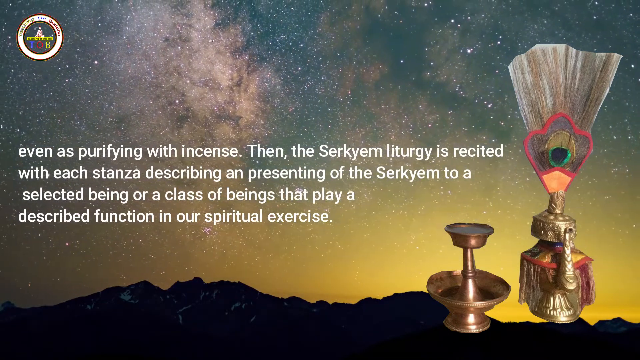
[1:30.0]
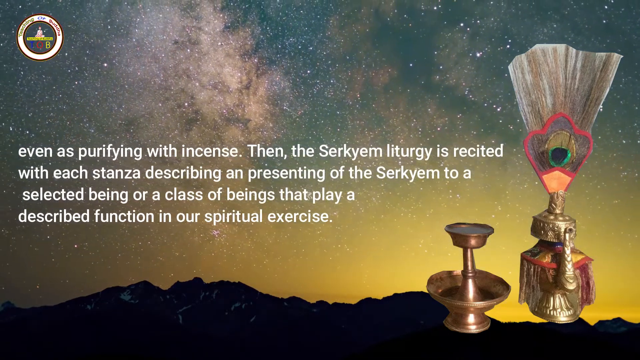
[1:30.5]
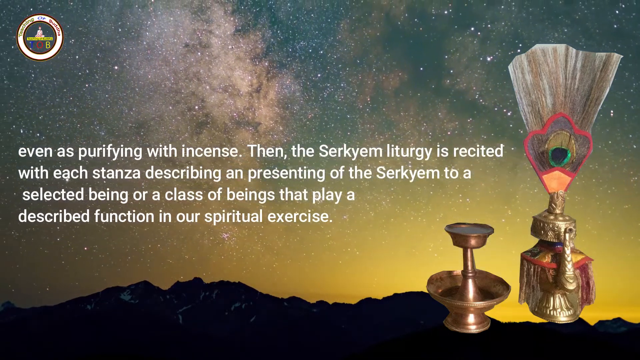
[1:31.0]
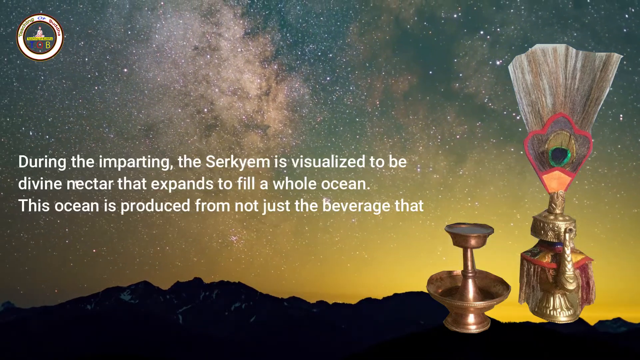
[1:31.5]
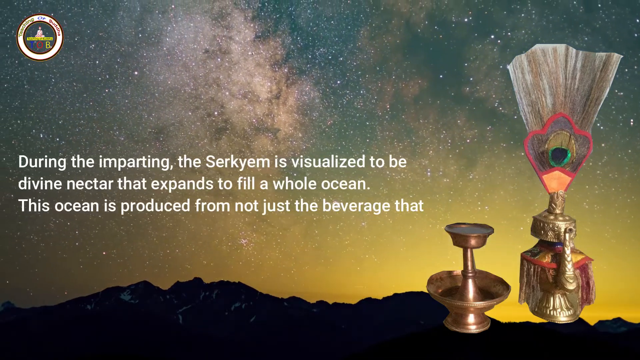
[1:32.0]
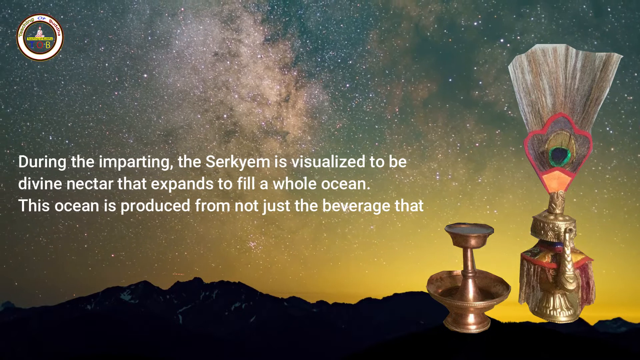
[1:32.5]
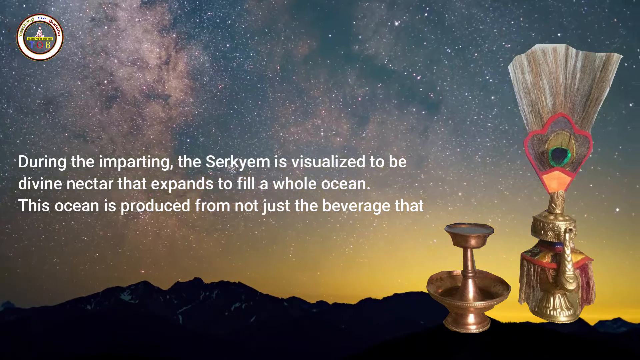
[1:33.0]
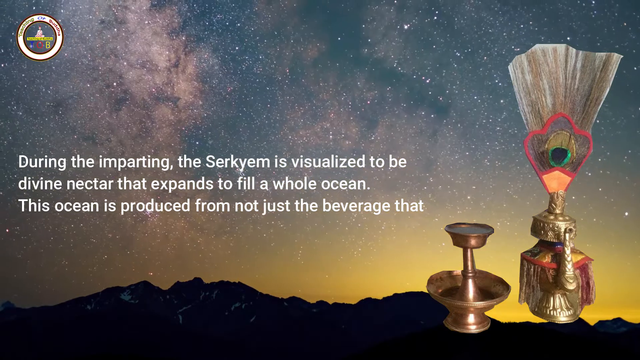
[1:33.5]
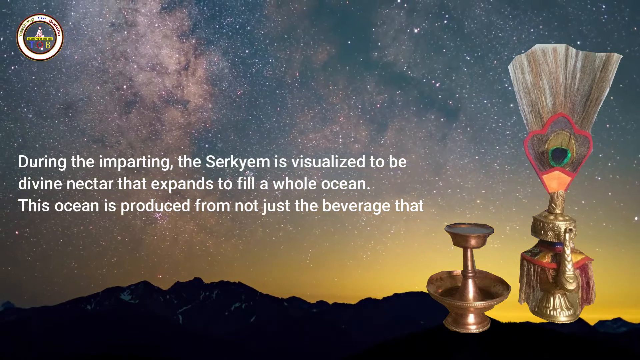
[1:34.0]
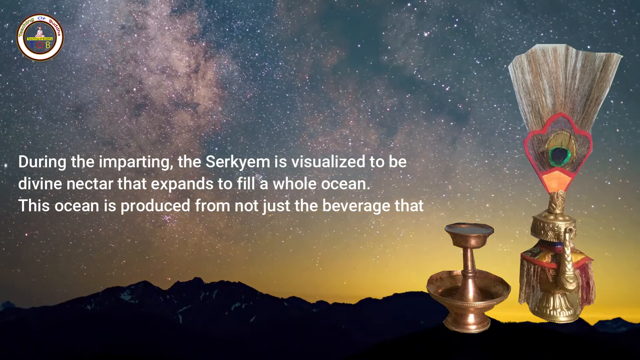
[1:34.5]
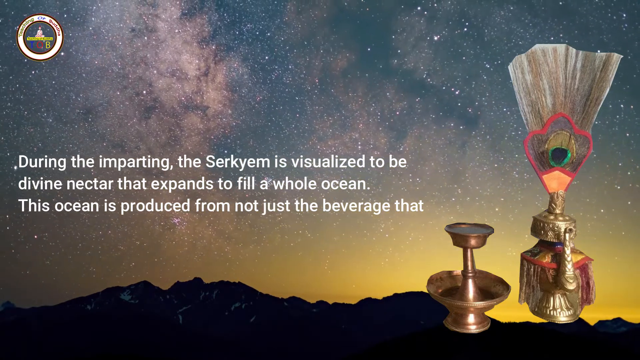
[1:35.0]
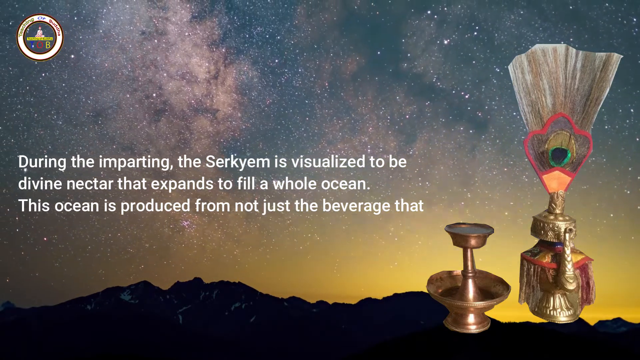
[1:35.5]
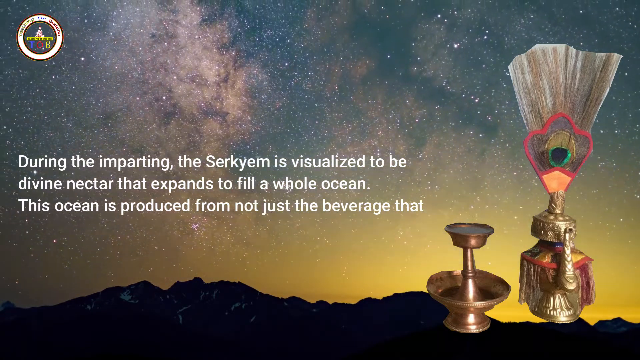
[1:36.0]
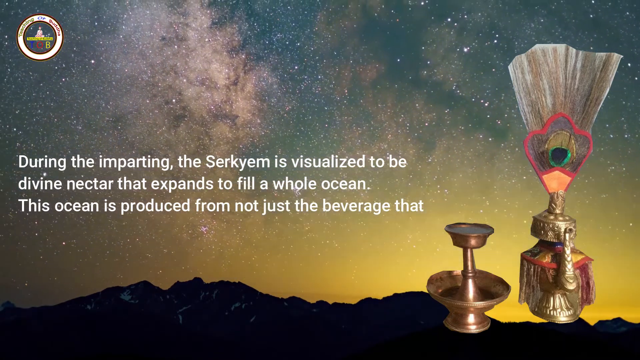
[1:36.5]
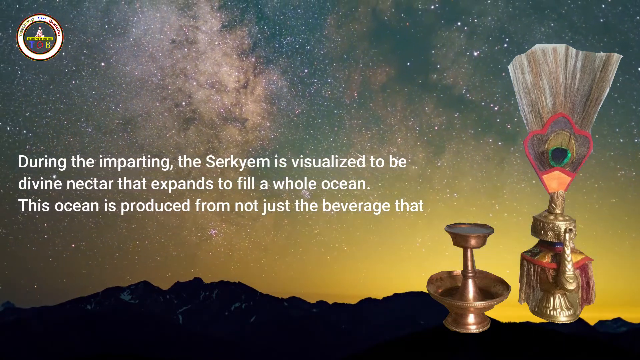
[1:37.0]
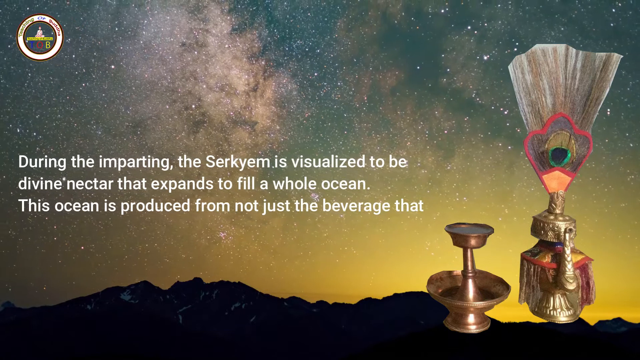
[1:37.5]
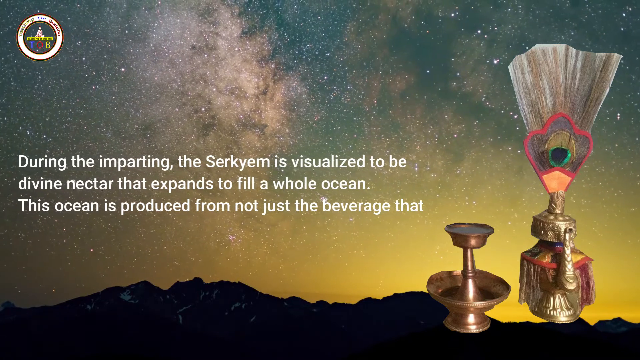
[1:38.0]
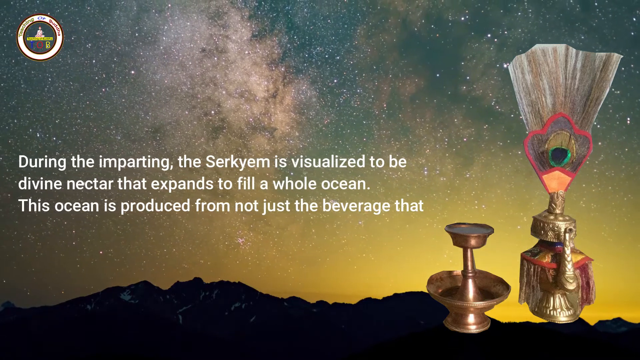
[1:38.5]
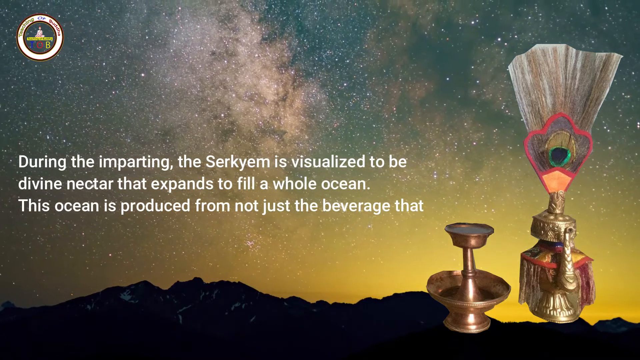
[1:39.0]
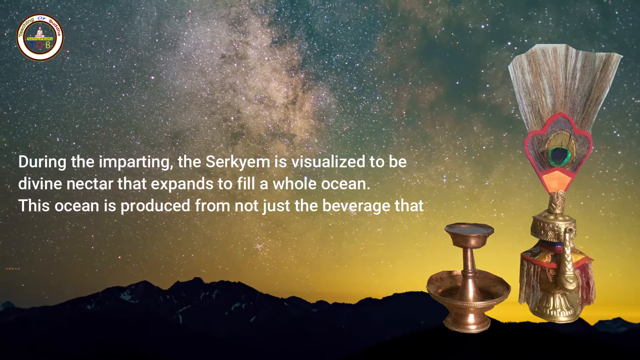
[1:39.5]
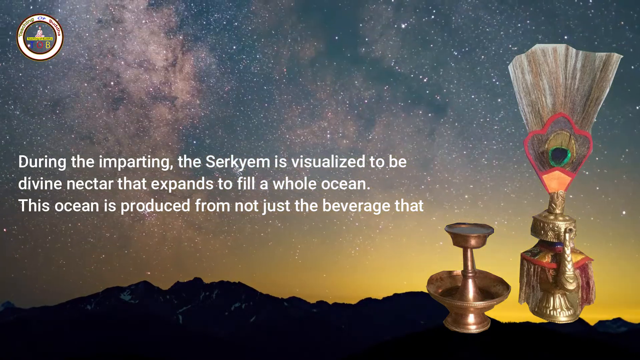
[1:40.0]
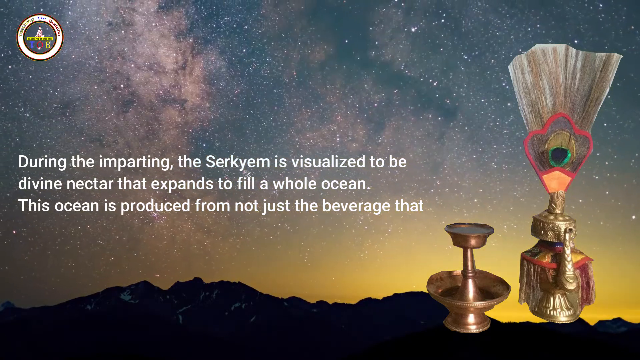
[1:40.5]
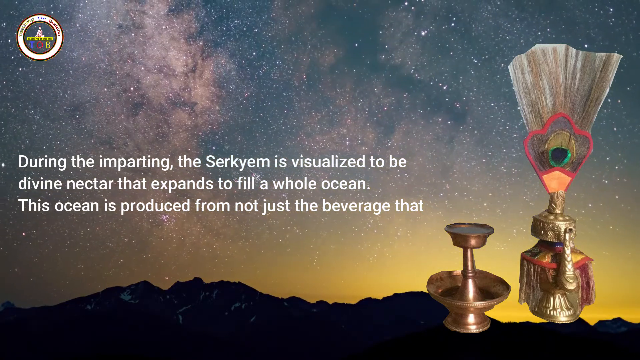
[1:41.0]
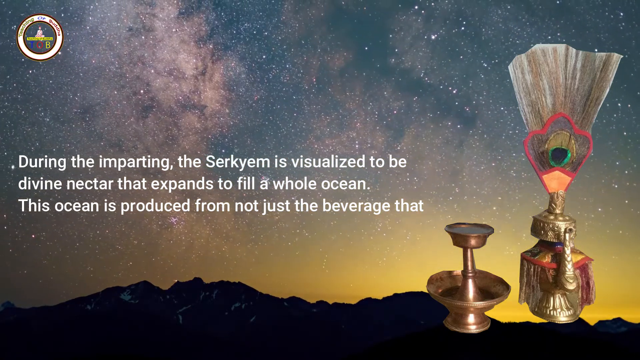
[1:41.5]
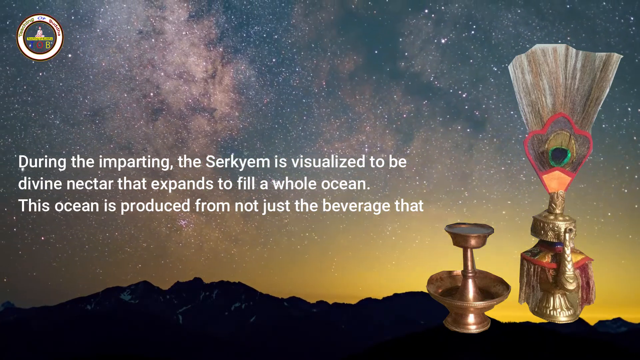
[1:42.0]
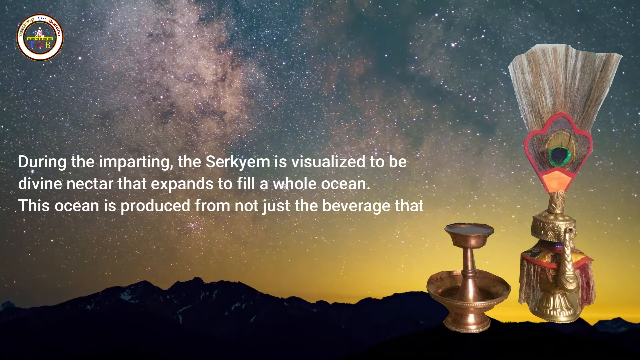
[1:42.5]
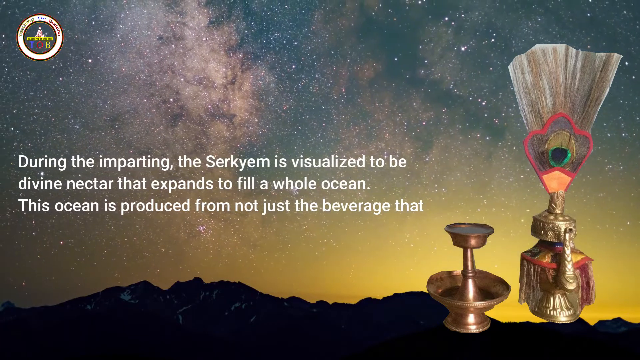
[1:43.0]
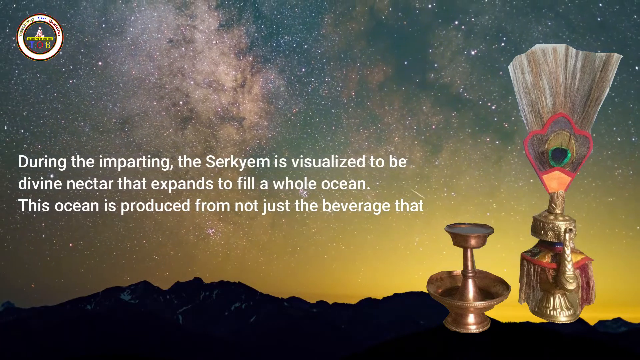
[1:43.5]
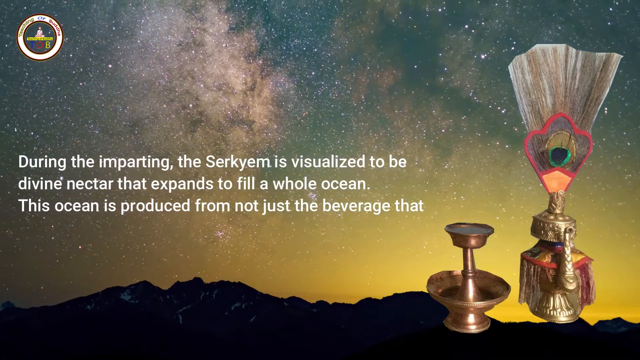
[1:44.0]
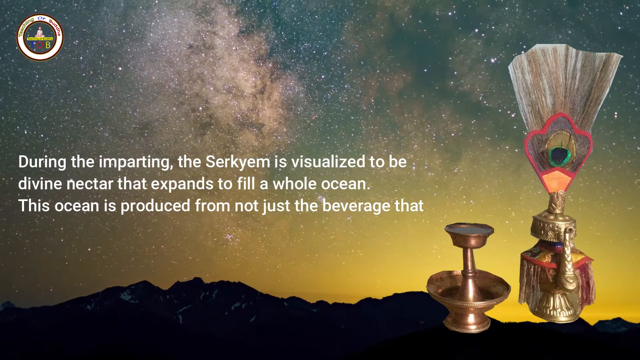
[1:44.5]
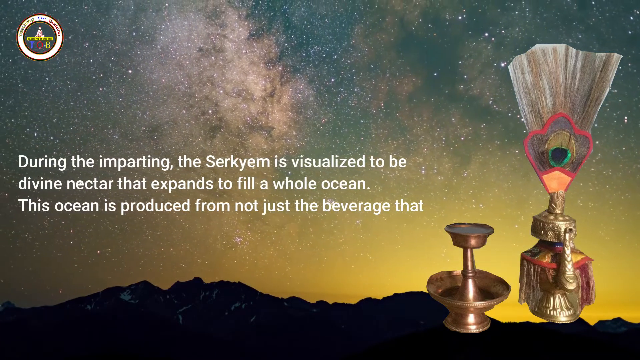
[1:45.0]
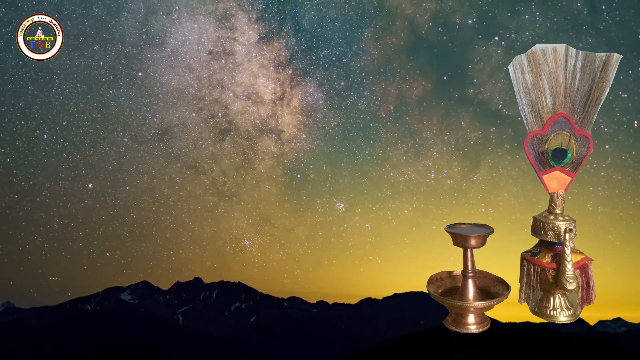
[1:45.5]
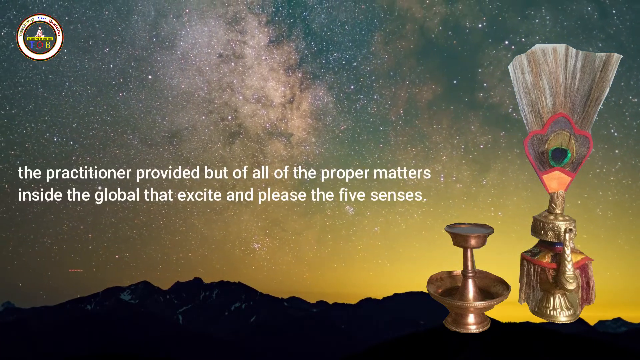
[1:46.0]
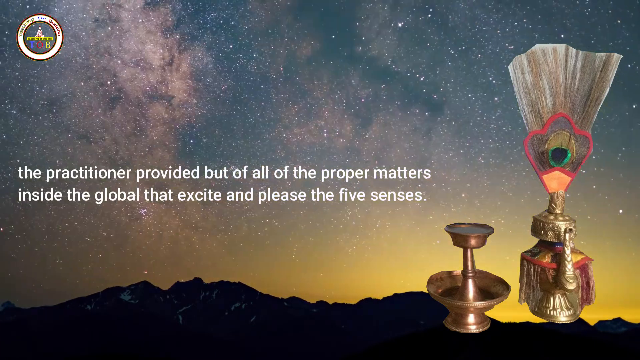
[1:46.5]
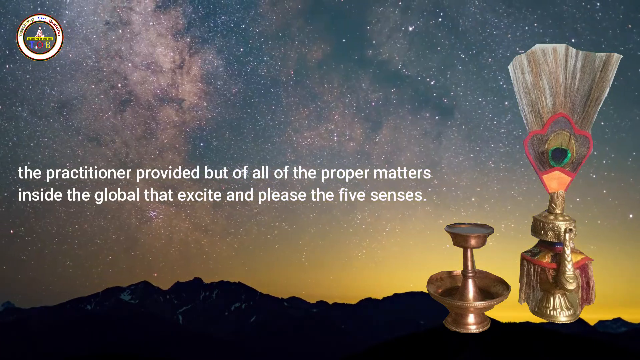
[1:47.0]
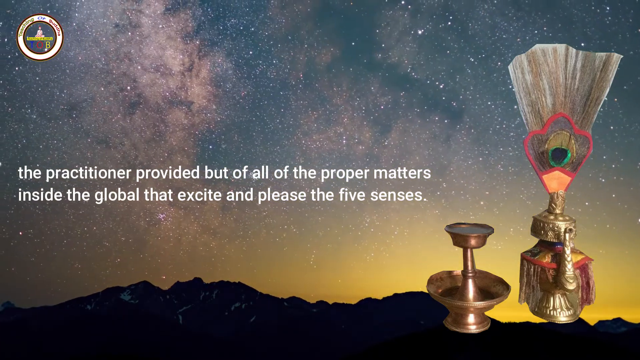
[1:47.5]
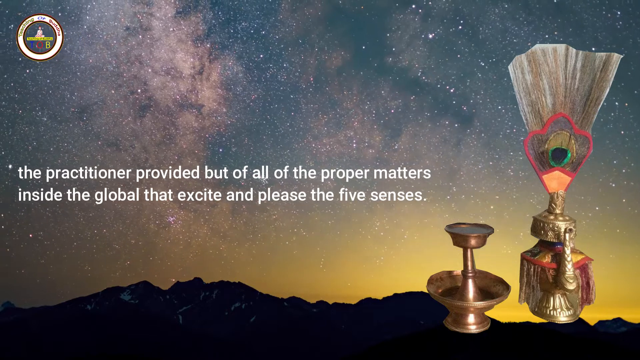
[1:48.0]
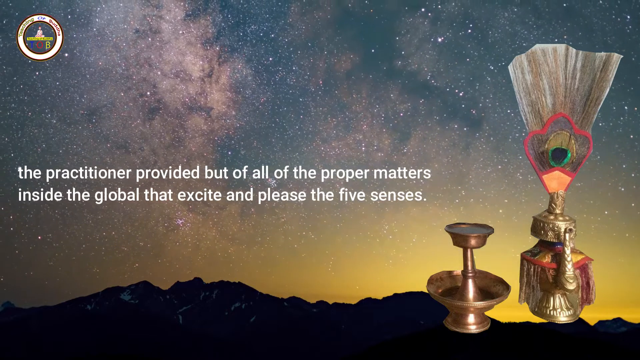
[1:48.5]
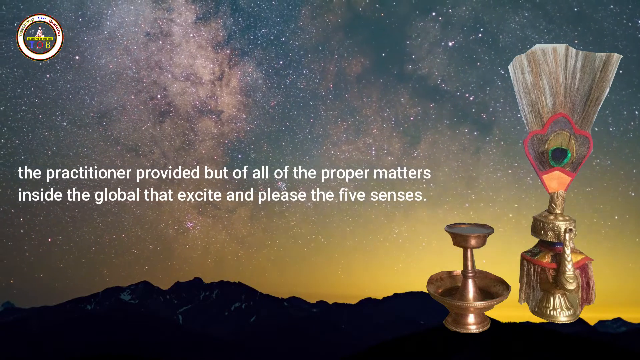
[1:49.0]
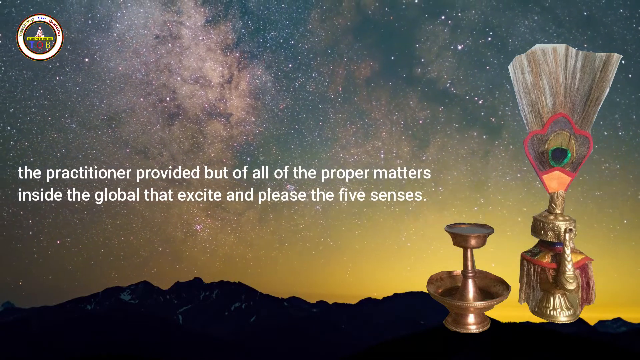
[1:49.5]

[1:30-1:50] The text changes to read "during the imparting, the circium is visualized to be divine nectar that expands to fill a whole ocean," continuing "This ocean is produced from not just the beverage," and then it fades away. Only the text and the night sky background change; everything else remains the same. Later the background looks somewhat dimmer than before, then brightens as it goes along.